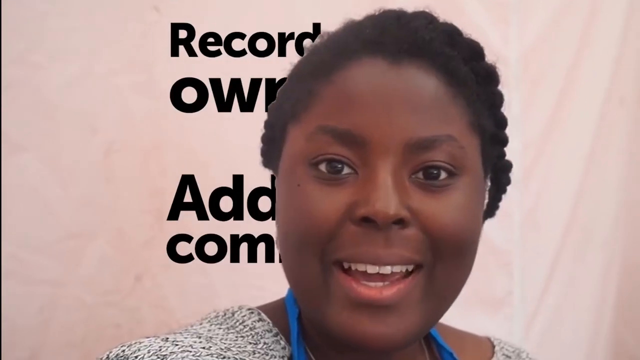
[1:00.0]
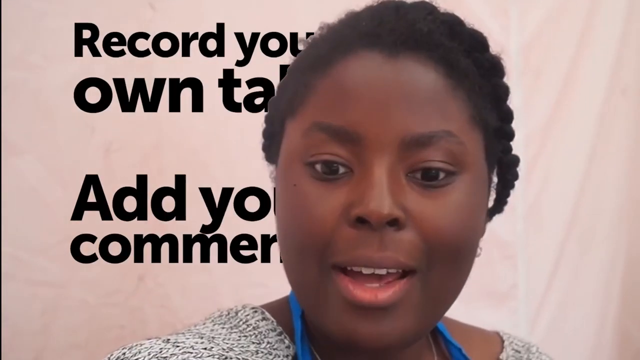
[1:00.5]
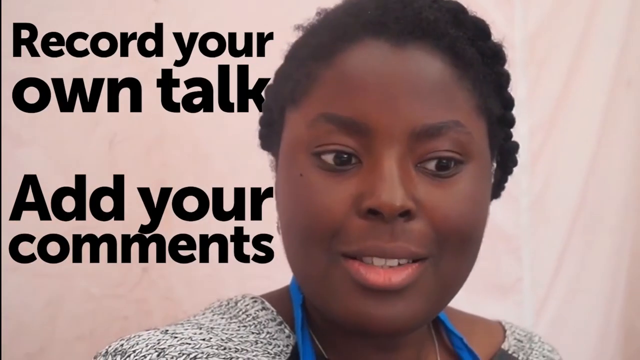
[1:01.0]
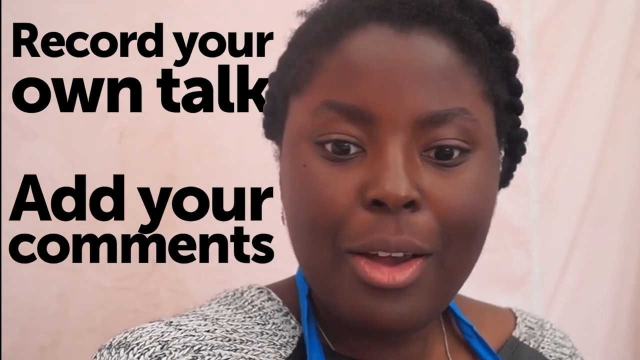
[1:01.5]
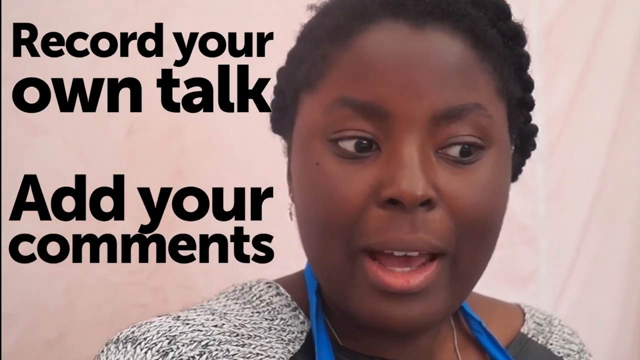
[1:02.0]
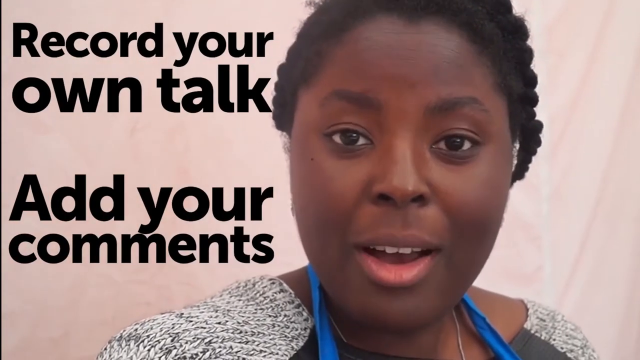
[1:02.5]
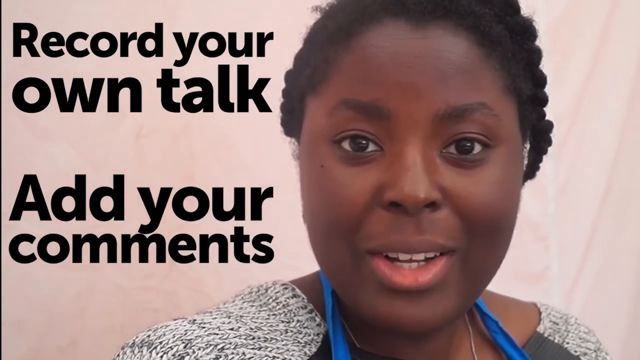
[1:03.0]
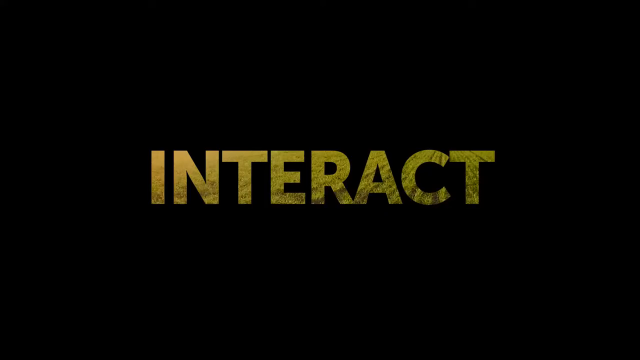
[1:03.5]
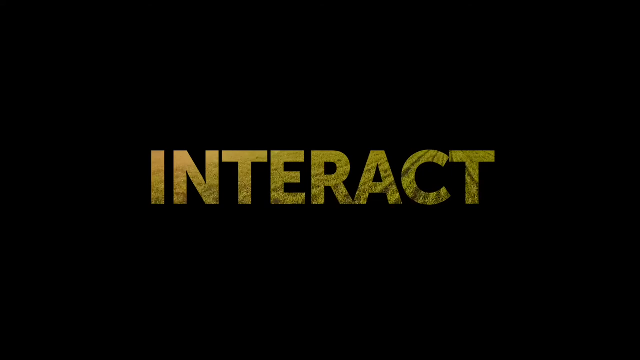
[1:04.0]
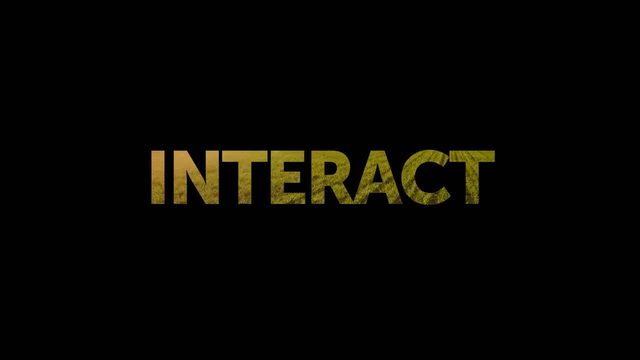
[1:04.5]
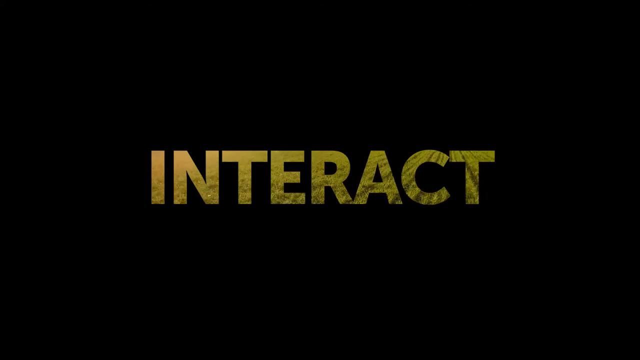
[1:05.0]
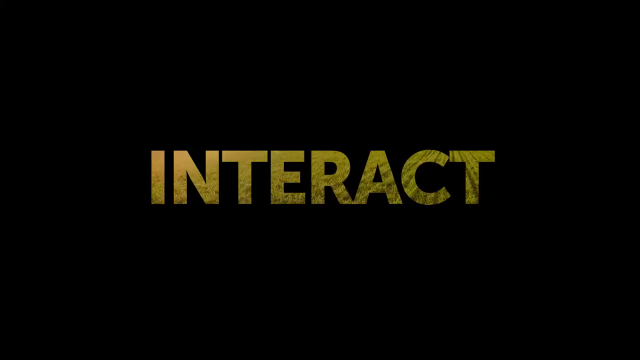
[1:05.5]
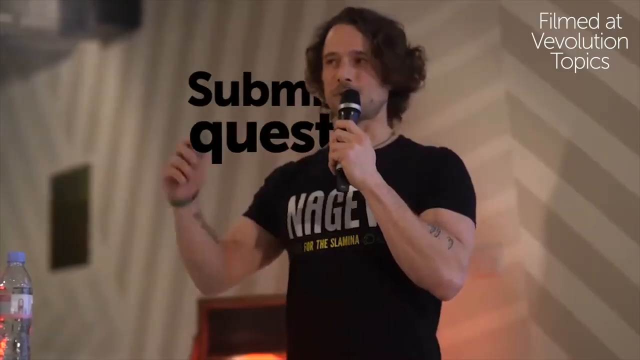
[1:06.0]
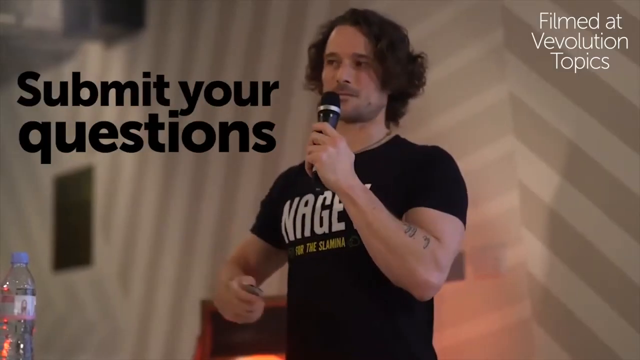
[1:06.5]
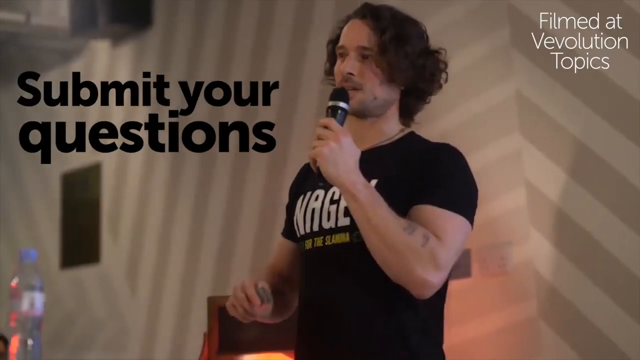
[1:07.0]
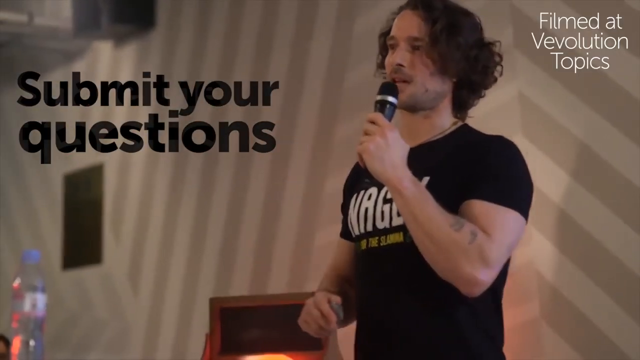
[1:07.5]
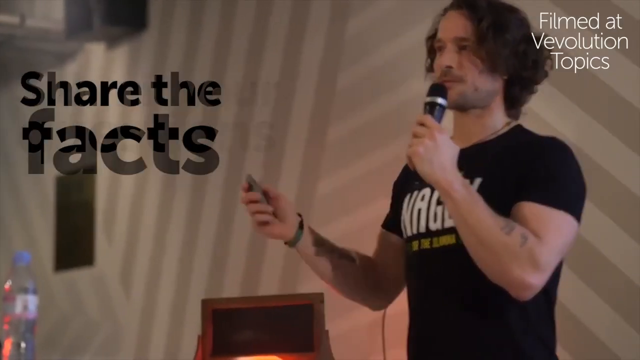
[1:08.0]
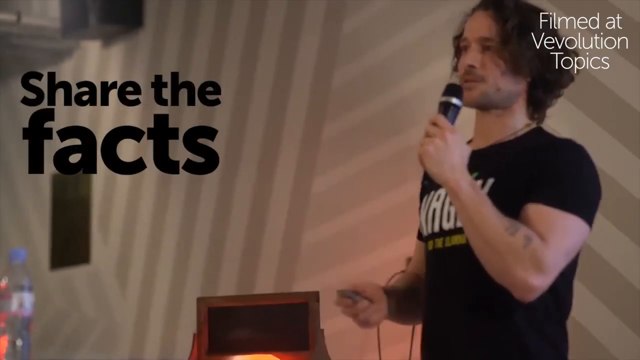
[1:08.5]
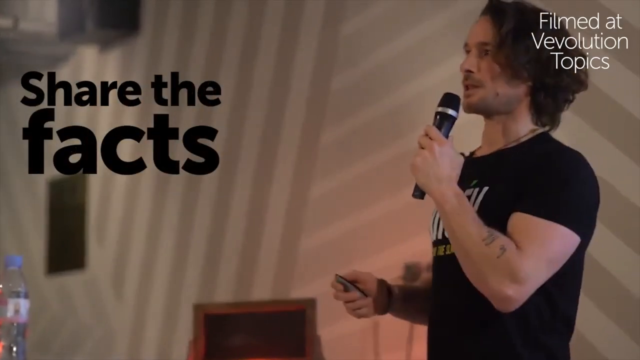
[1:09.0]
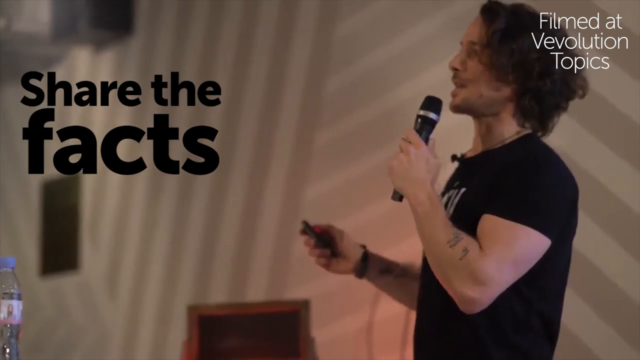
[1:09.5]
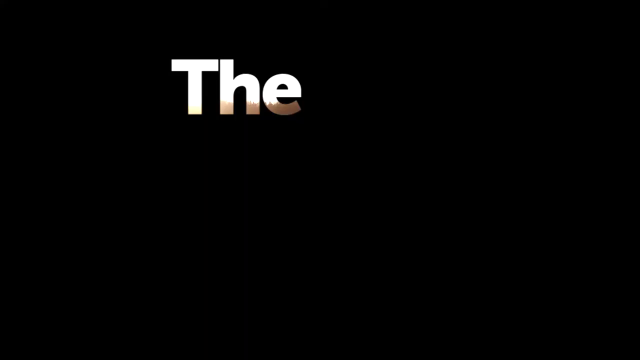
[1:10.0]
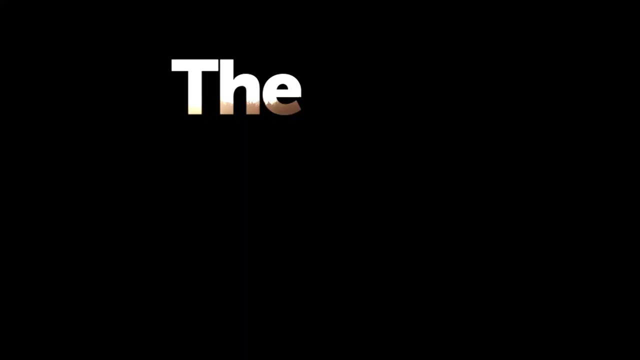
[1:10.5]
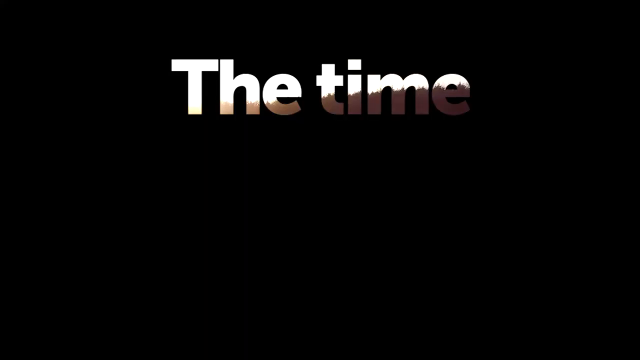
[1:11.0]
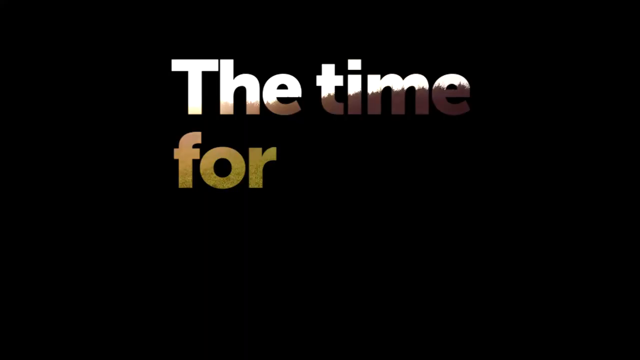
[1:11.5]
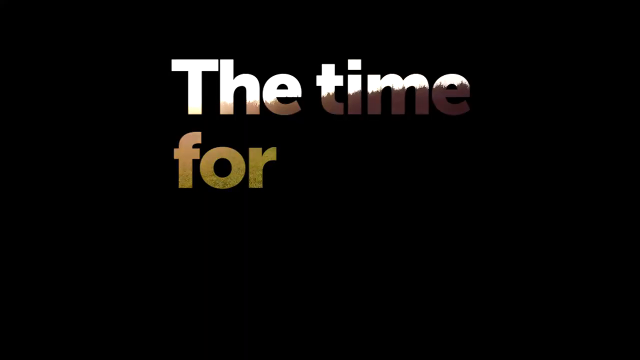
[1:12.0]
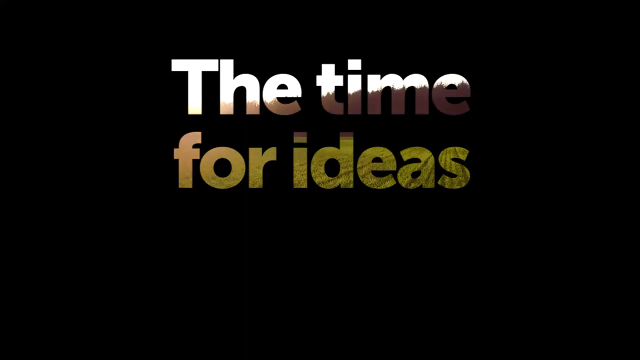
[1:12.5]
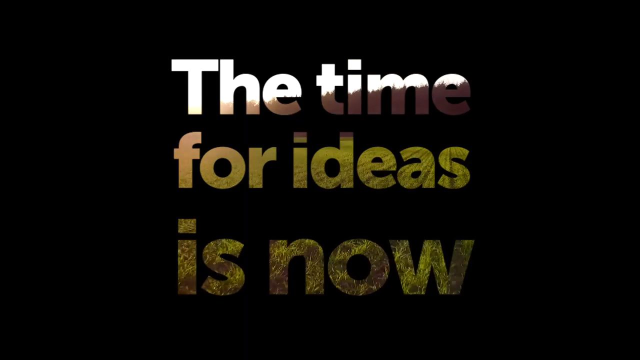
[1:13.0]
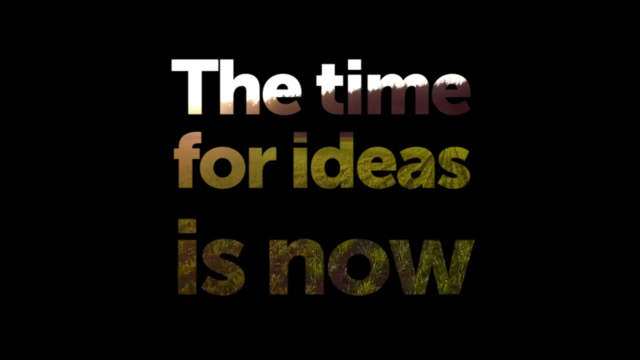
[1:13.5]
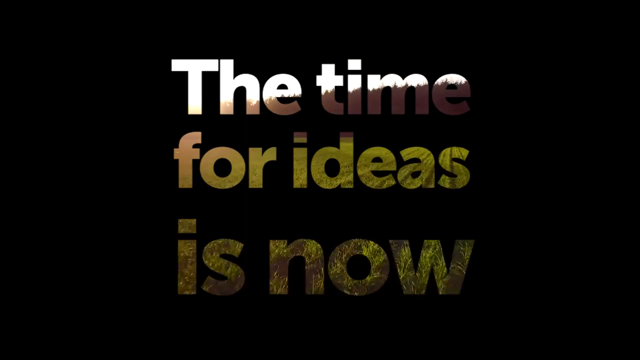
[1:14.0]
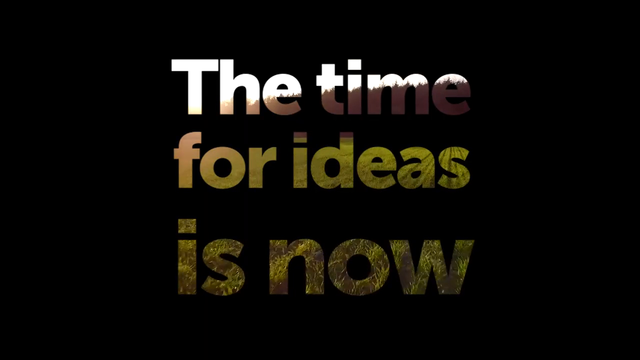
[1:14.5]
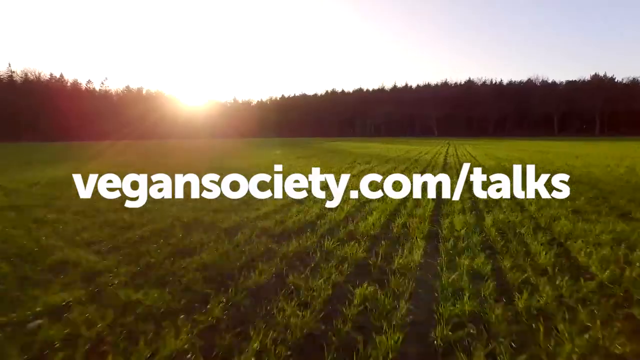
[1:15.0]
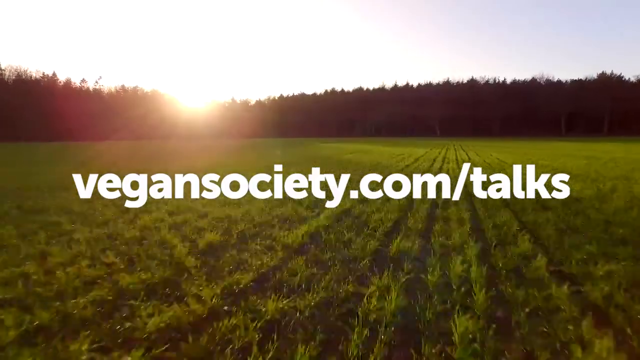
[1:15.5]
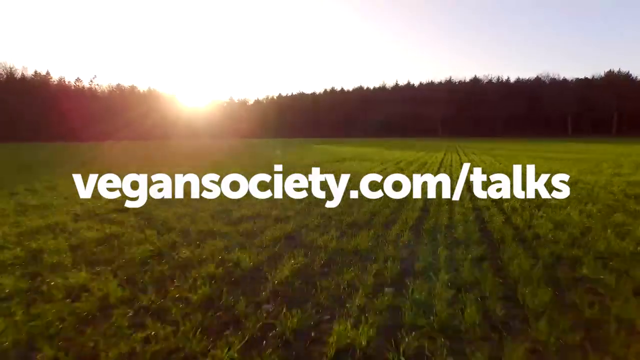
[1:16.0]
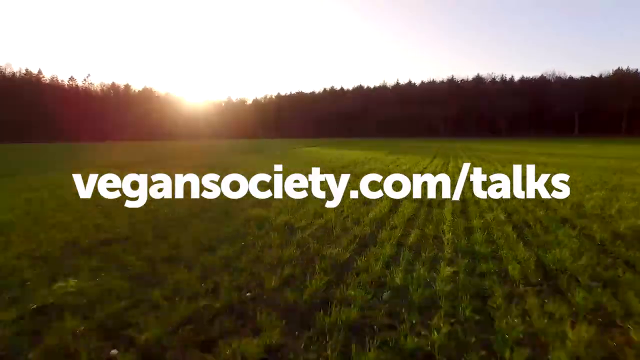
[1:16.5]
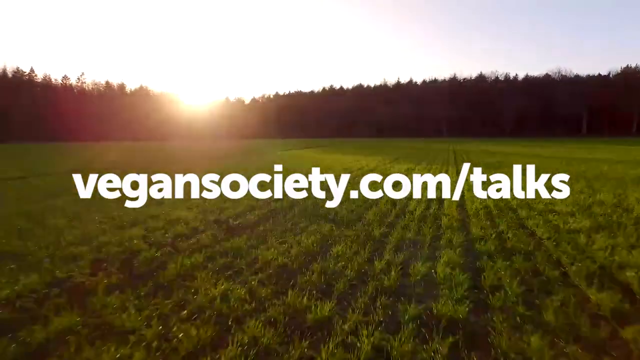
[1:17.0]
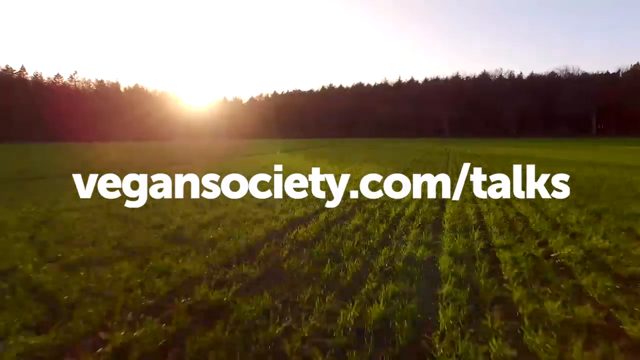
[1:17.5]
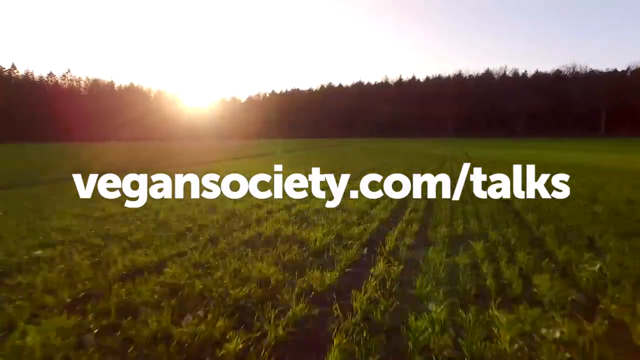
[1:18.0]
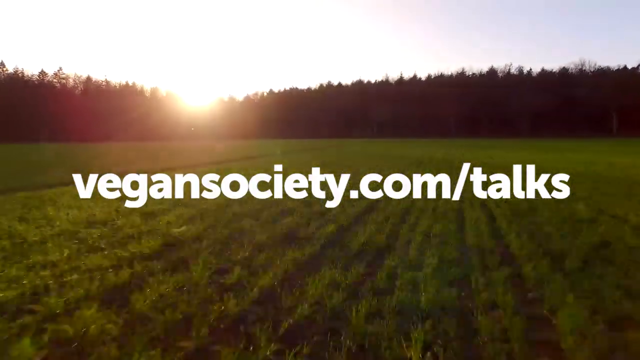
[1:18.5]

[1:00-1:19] A lady says, "record your own talk and add your own comments"; she wears some type of blue lanyard around her neck. The shot switches to a black screen showing the word "interact," which sits on the black background but has the color of the crops in the field, with the video moving over it. A gentleman appears, and the text "submit your questions" is shown. He speaks with a black microphone and holds a clicker pointer. Text reads "the time for ideas is now" and "vegansociety.com/talks" as the view scrolls over the field.